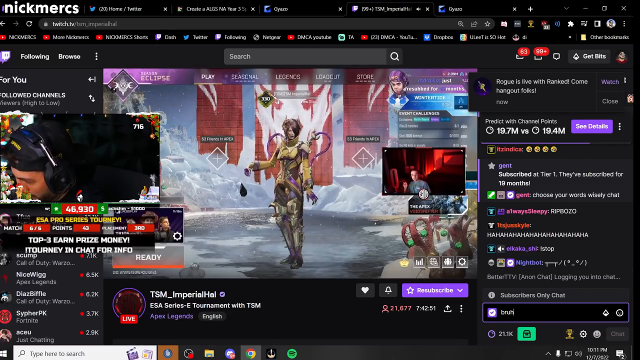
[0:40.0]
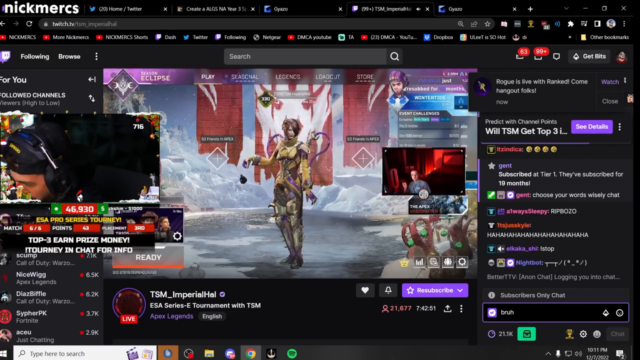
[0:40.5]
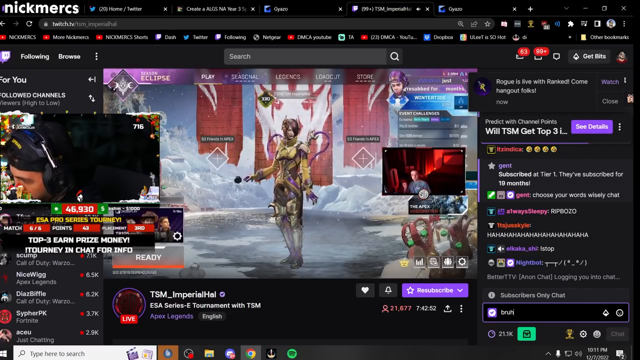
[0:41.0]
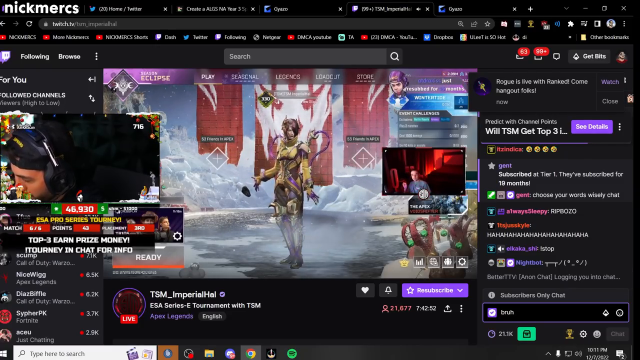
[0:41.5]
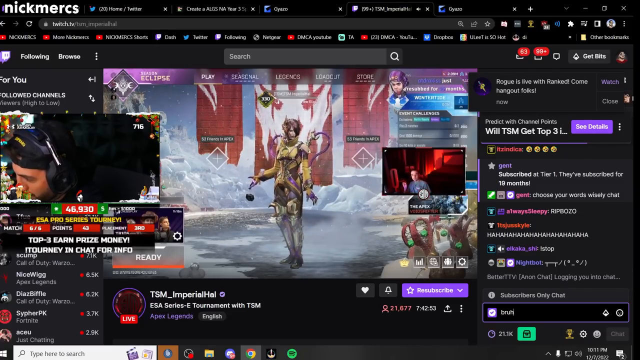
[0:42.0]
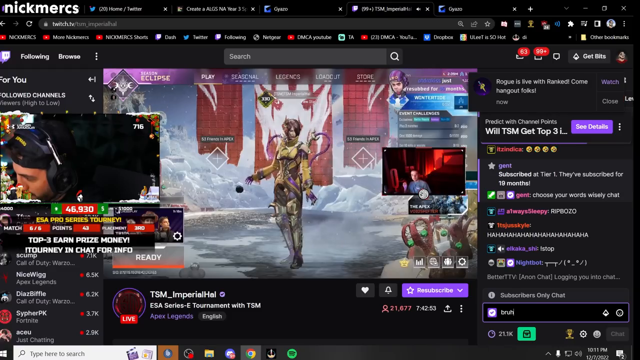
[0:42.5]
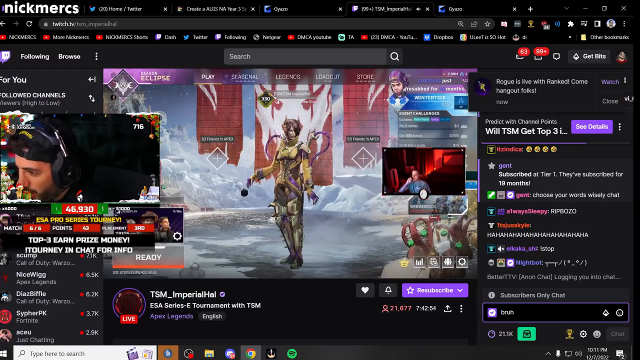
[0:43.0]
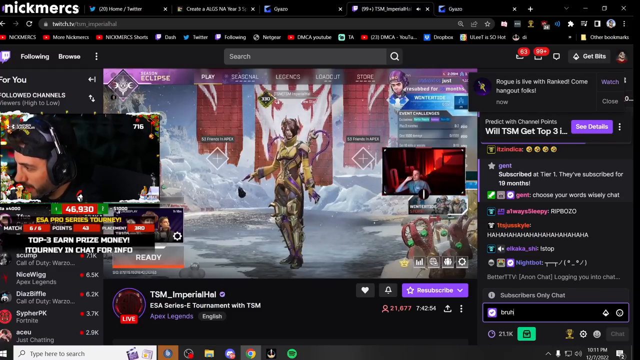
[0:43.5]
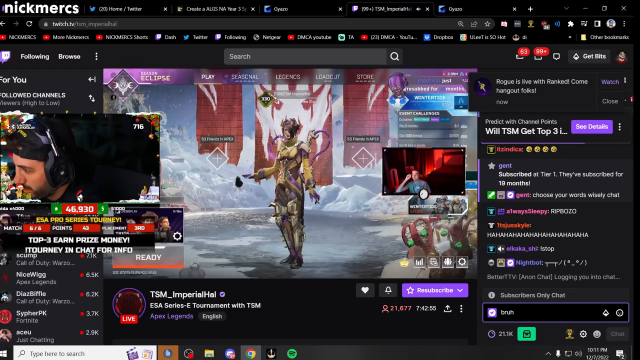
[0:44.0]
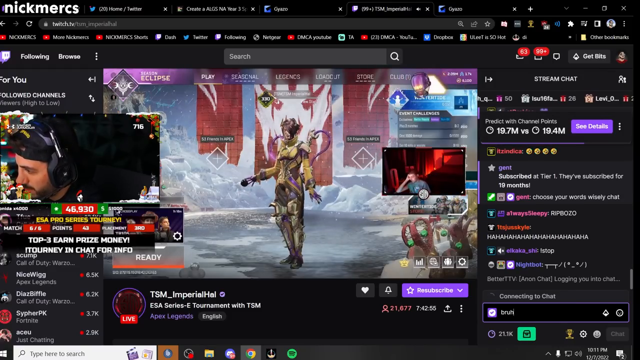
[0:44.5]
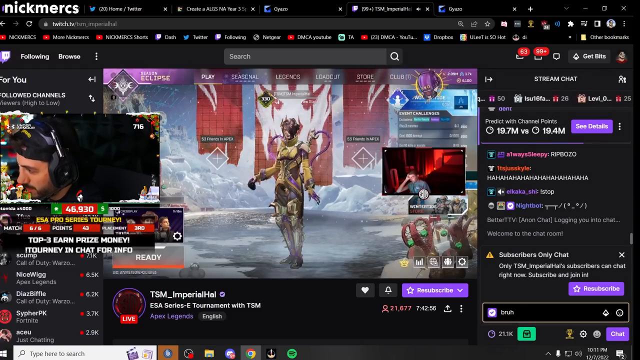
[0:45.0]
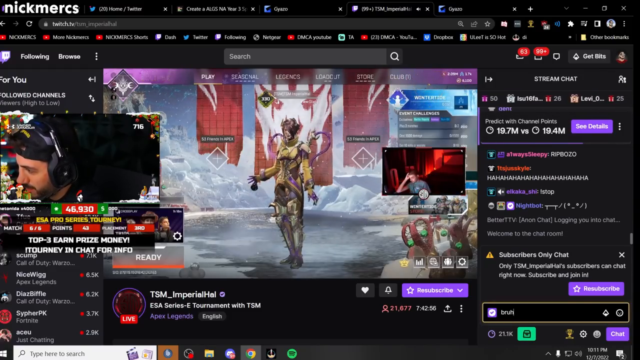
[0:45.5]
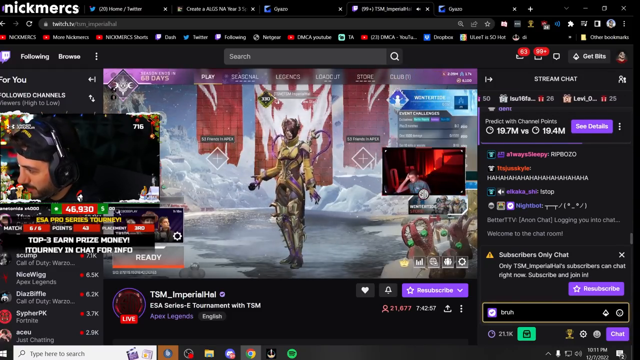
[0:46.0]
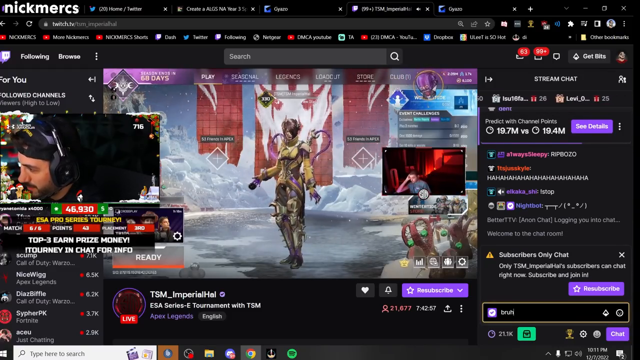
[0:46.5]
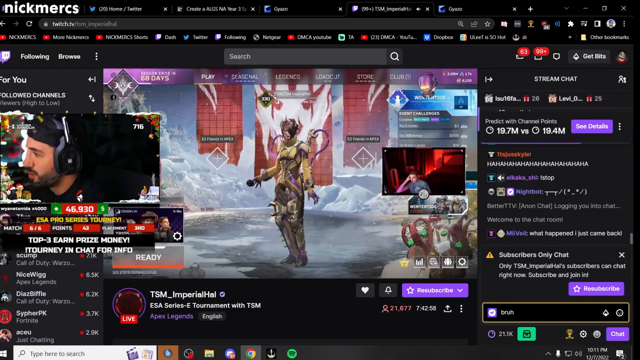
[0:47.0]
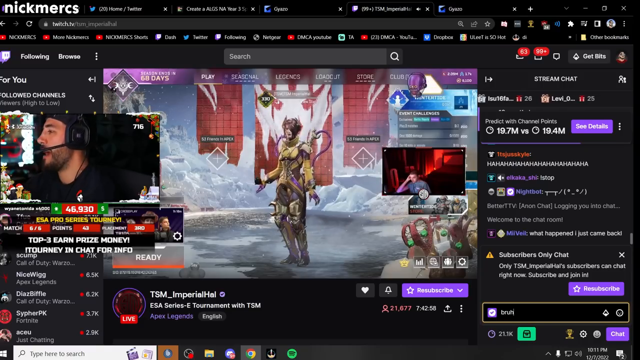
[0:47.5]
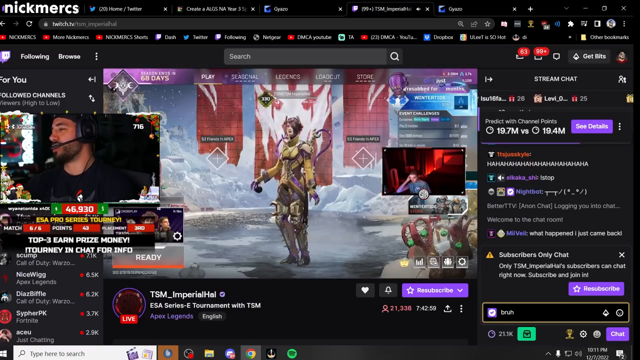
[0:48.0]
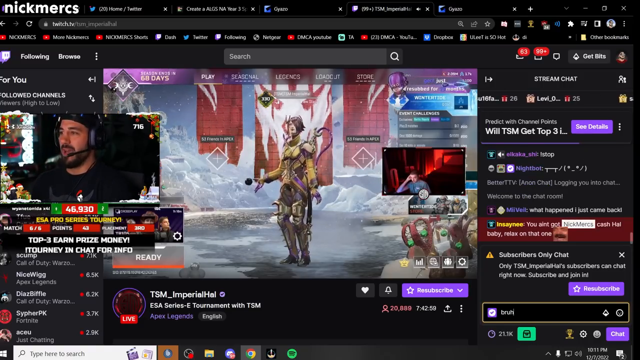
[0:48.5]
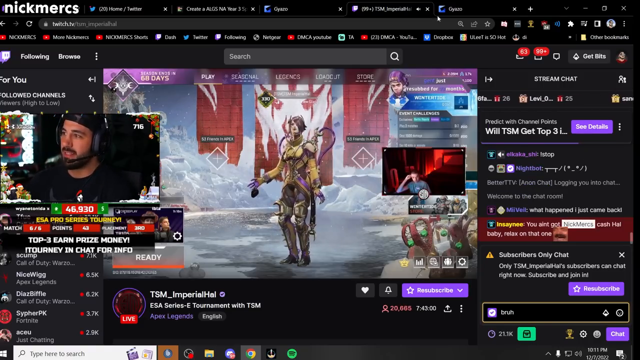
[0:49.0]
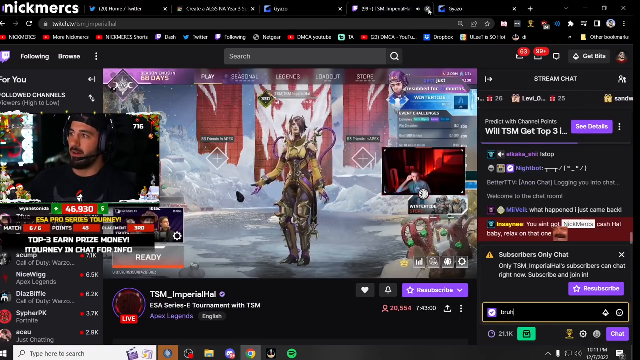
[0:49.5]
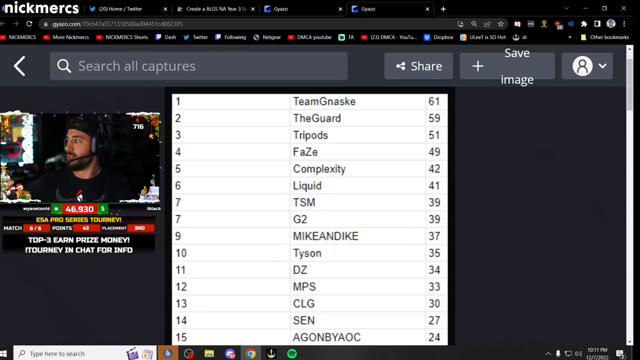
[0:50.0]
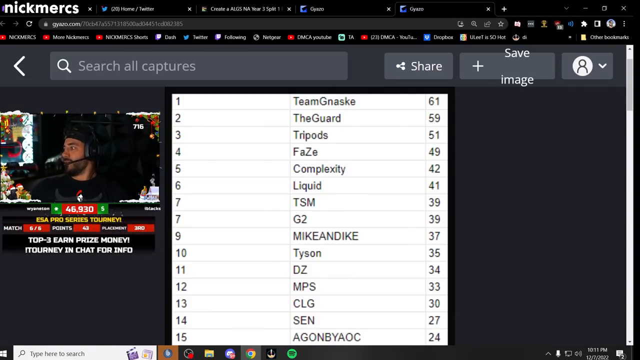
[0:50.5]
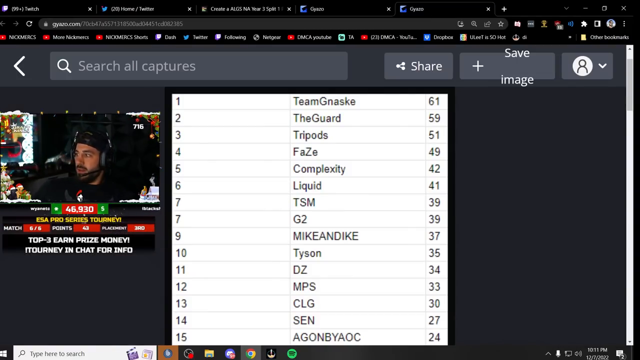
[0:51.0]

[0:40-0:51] The streamer keeps talking back and forth about various things in the menu. The chat on the right side scrolls by as more and more people enter or leave the chat to give their opinions. The other streamer from the beginning of the video is still visible, sitting to the right side of the main video screen and waiting on the streamer. The streamer then moves the mouse up and clicks on a tab that shows some sort of table with team names, scores, and standings from 1st place down to 14th place.